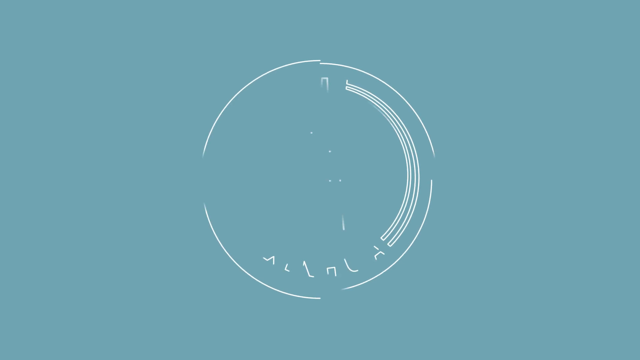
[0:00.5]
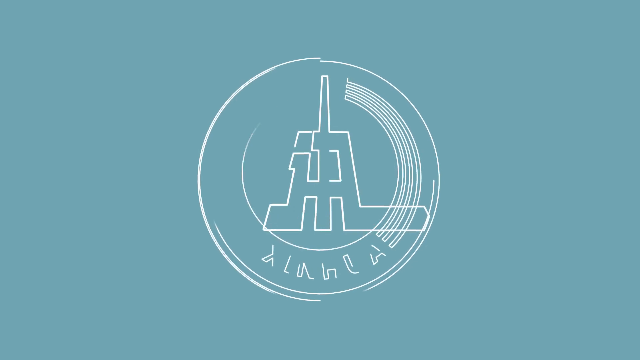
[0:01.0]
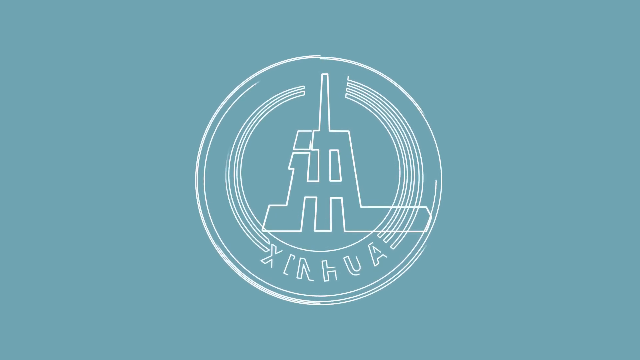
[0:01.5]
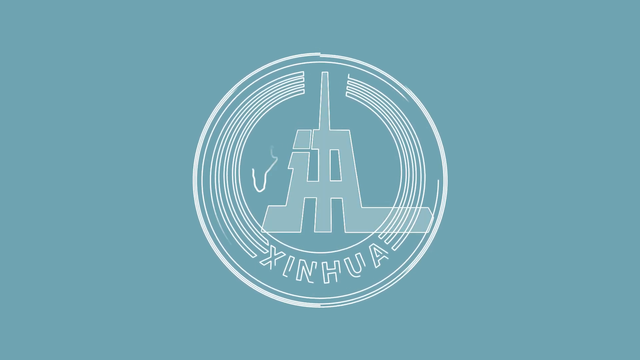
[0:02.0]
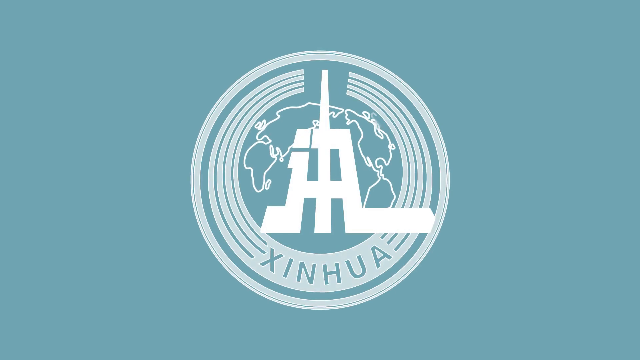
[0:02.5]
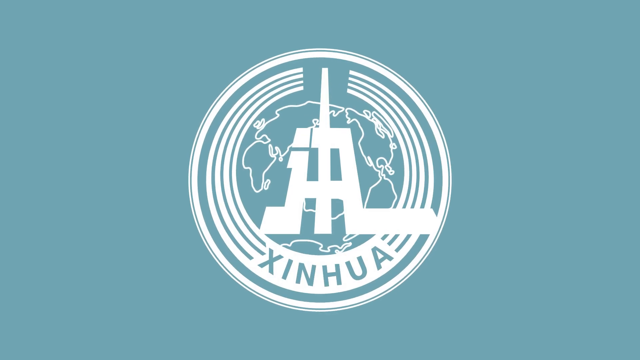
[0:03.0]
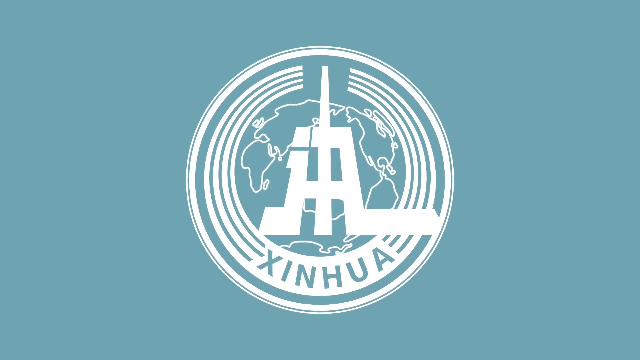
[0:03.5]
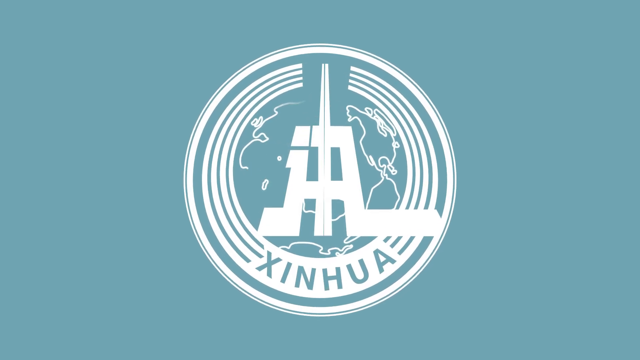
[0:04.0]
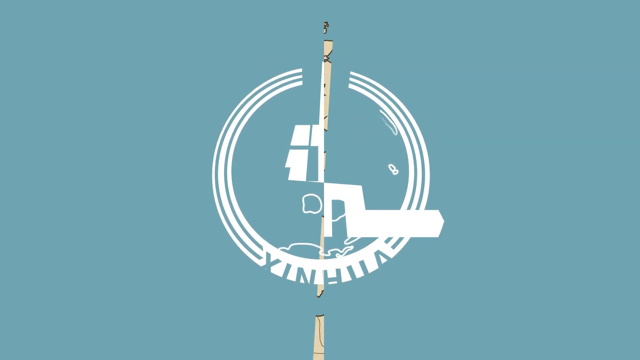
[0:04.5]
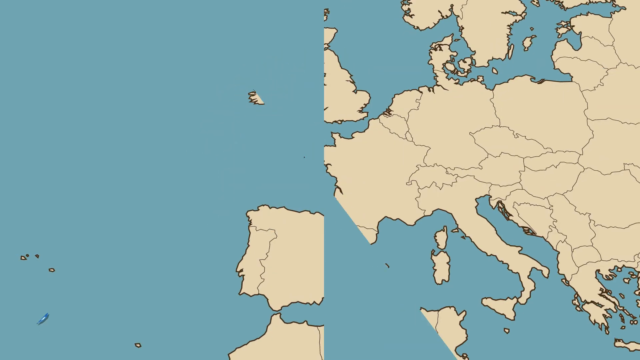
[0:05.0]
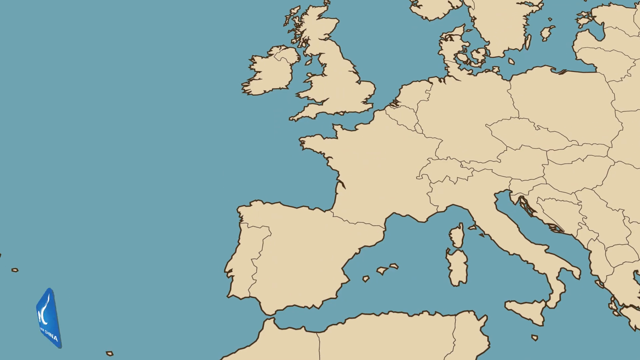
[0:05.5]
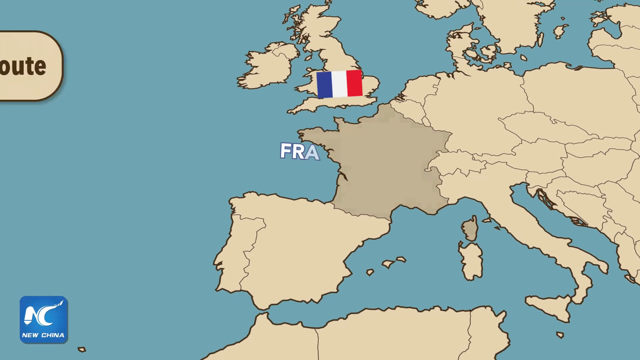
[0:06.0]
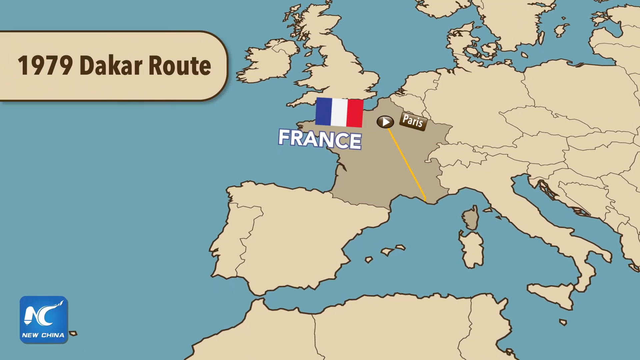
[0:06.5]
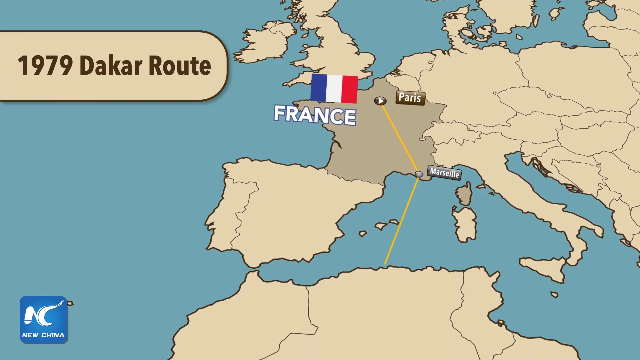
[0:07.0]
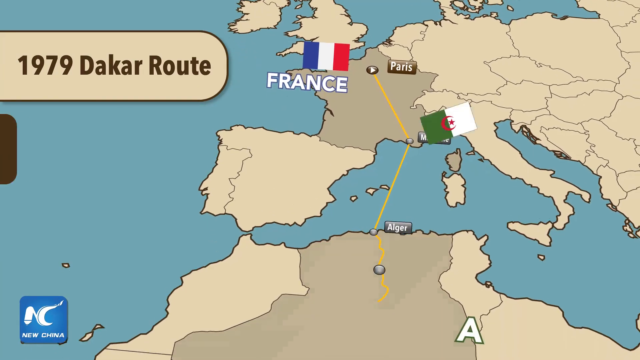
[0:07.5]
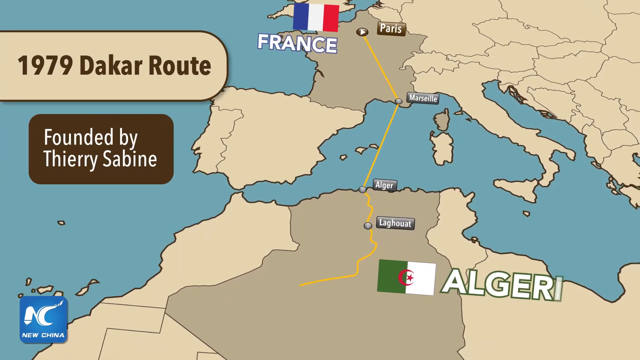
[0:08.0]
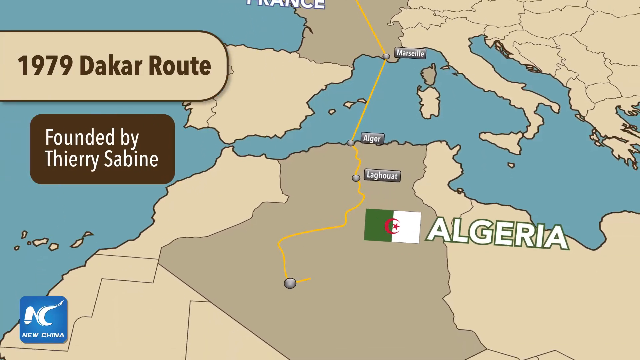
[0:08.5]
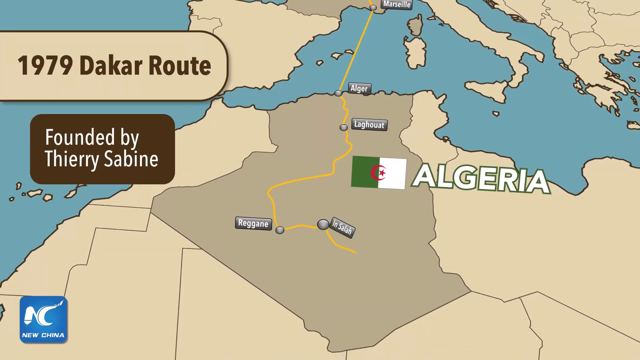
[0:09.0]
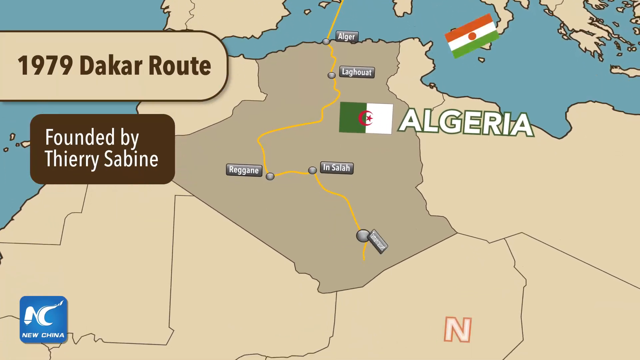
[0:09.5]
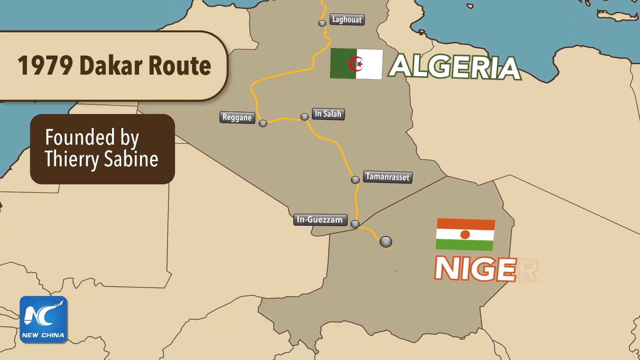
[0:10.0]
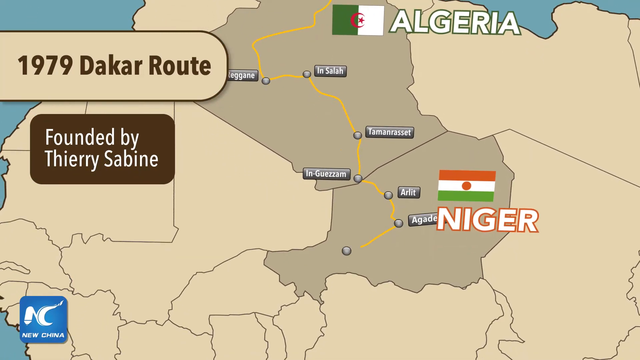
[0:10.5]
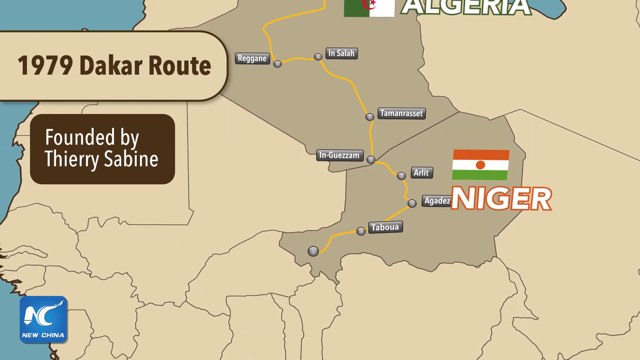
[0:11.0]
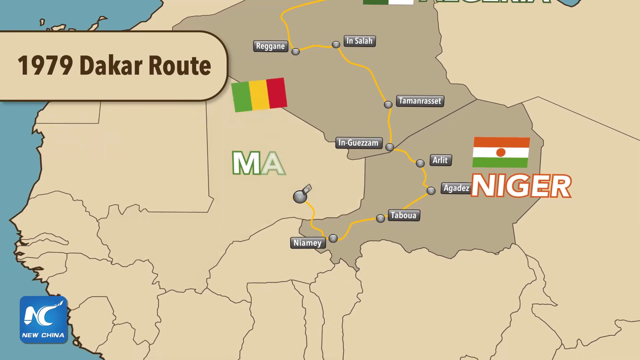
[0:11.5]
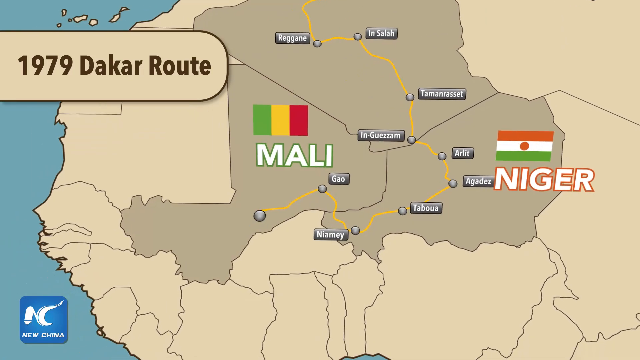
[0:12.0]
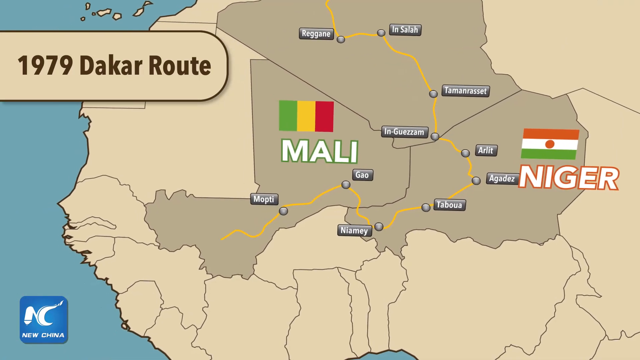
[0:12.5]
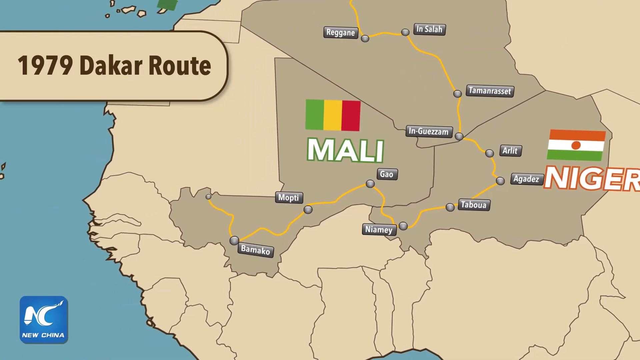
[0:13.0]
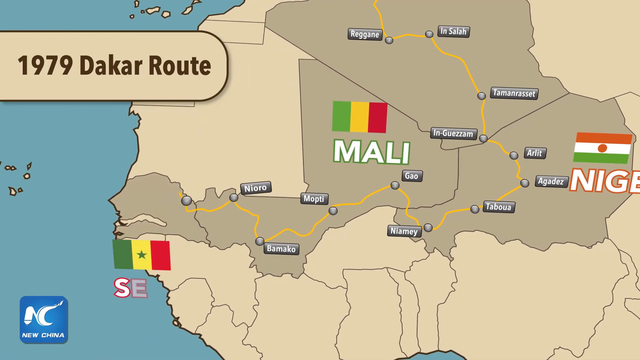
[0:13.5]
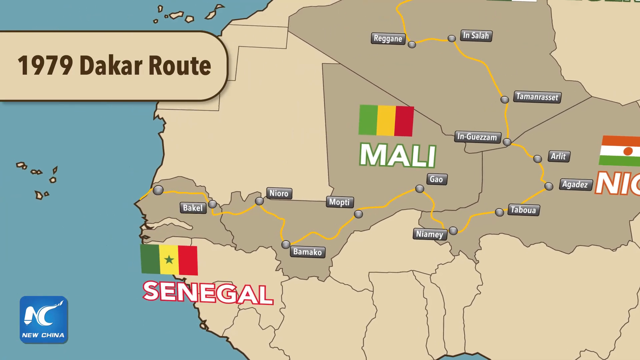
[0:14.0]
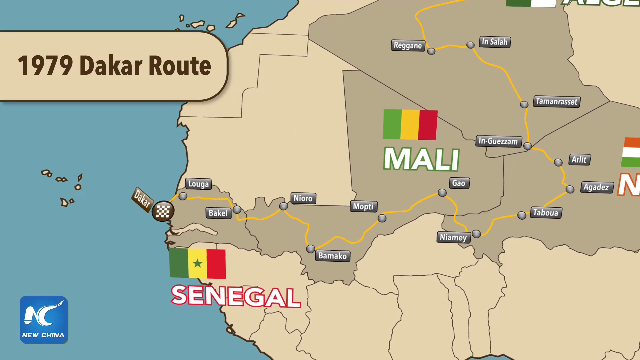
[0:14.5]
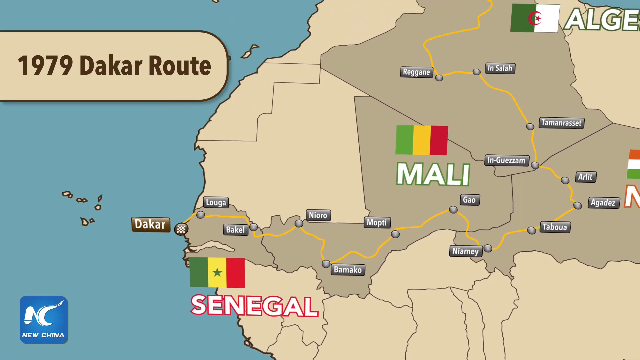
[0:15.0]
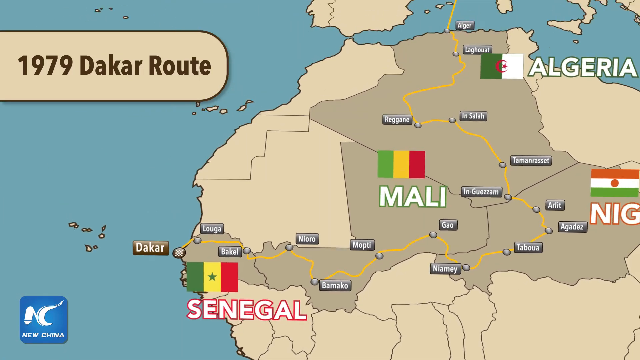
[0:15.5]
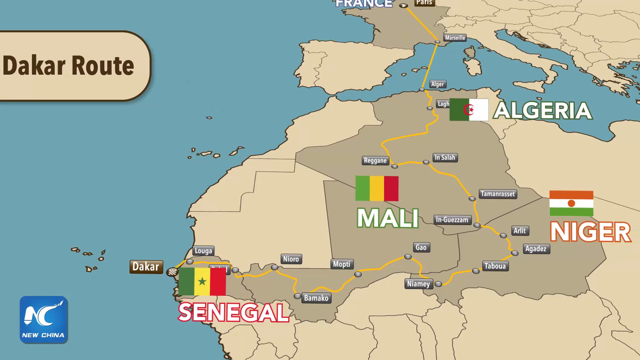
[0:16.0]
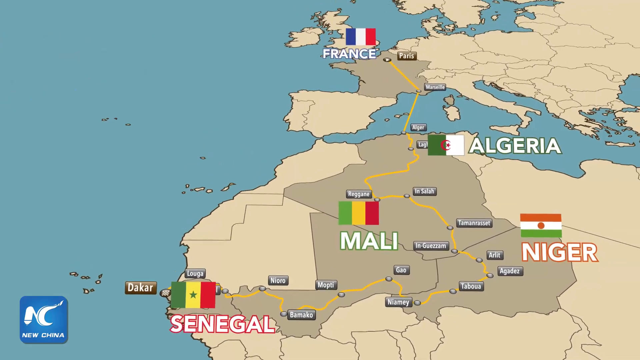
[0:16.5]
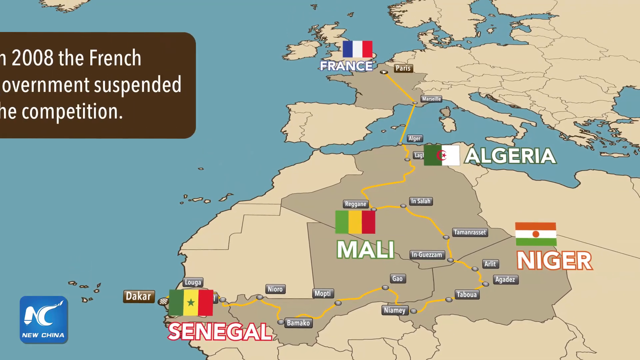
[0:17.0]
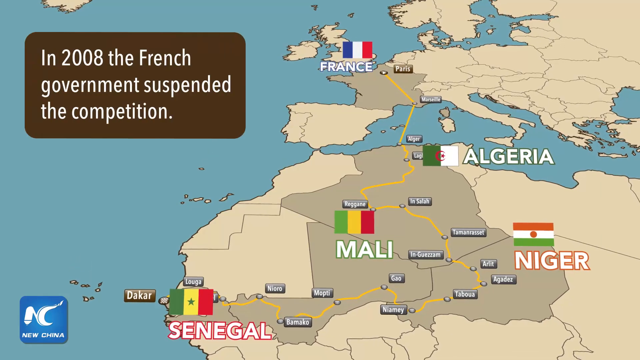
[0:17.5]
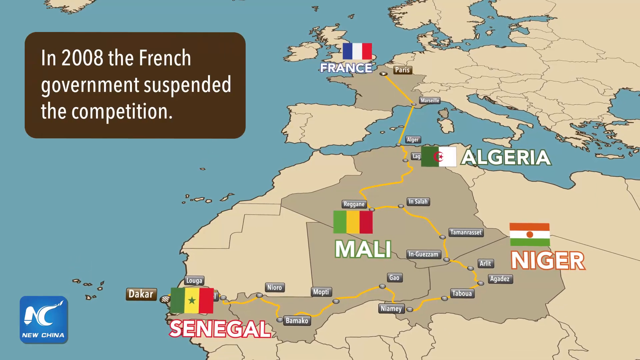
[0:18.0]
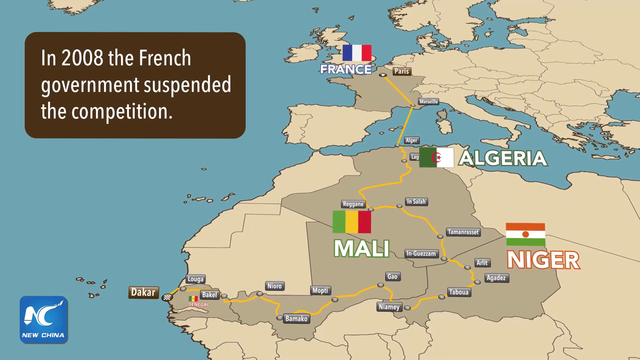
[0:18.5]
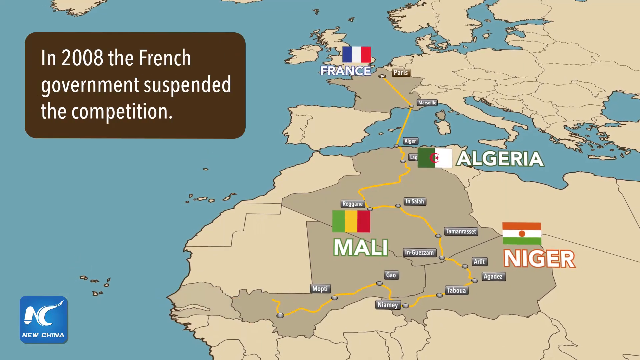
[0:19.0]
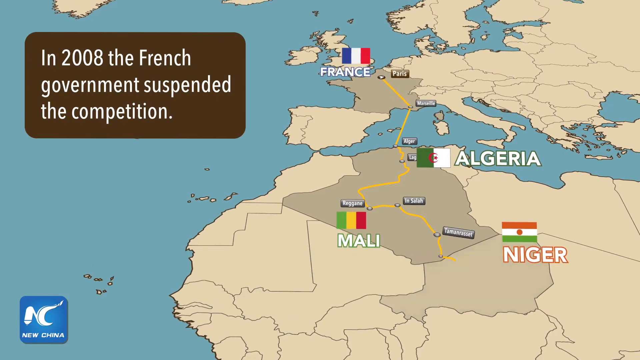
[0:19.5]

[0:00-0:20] A bluish screen opens an animated introduction: a white circle appears against a green-blue background and comes into focus as some type of building symbol, with the text "XINHUA". This fades into maps on the same blue-green background, with the land in a tan color. Text reads "1979 Dakar Route". France pops up along with the French flag, then Paris, then Algeria on the animated map. "NIG" pops up. It shows that it was founded by Thierry Sabin. Other cities pop up, including "Mal", possibly Mali, along with a bunch of small cities. Senegal pops up. A statistic then appears reading "in 2008 the French government suspended the competition". Niger pops up. The animation then goes back to a blue screen.